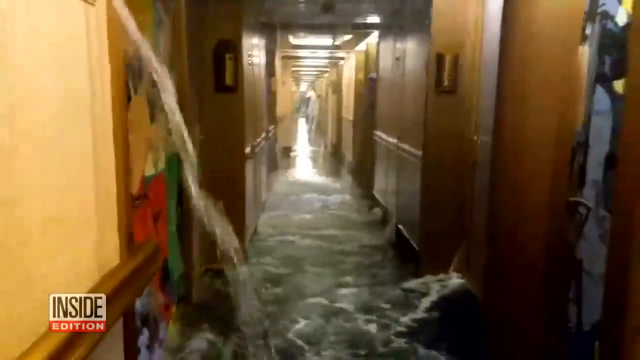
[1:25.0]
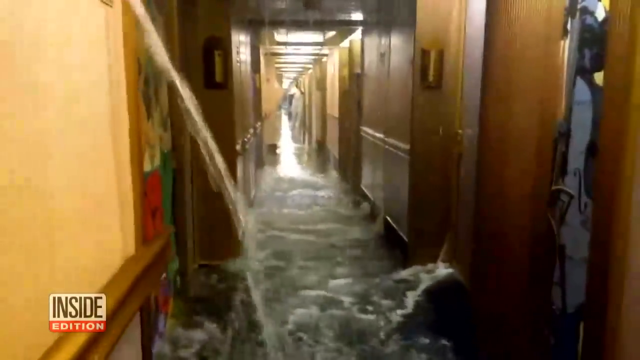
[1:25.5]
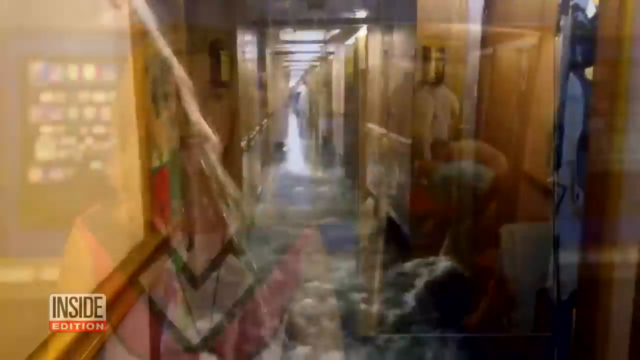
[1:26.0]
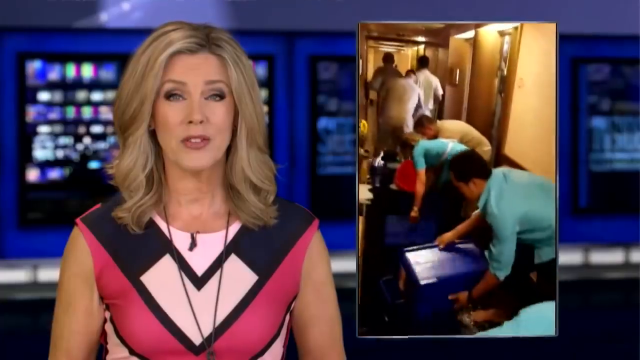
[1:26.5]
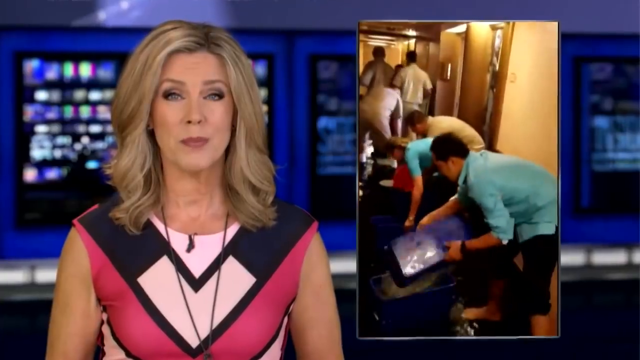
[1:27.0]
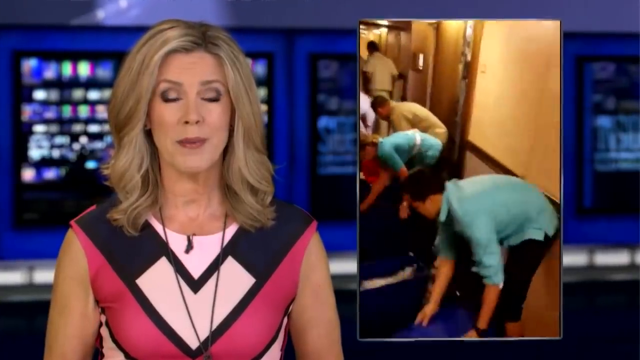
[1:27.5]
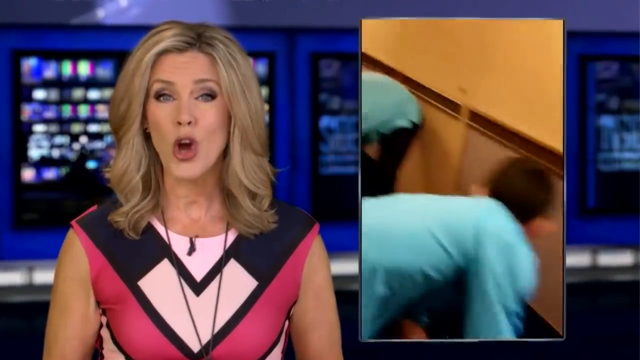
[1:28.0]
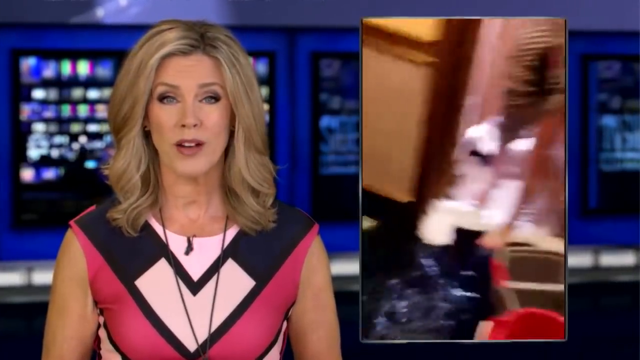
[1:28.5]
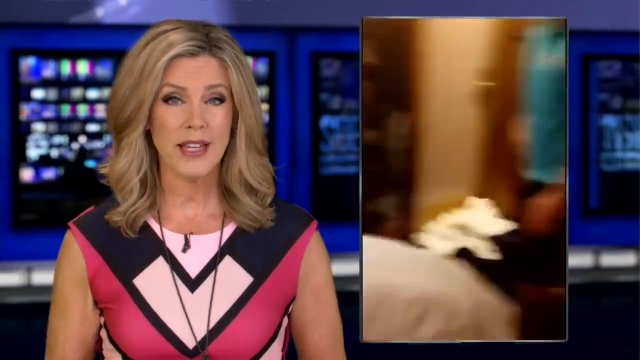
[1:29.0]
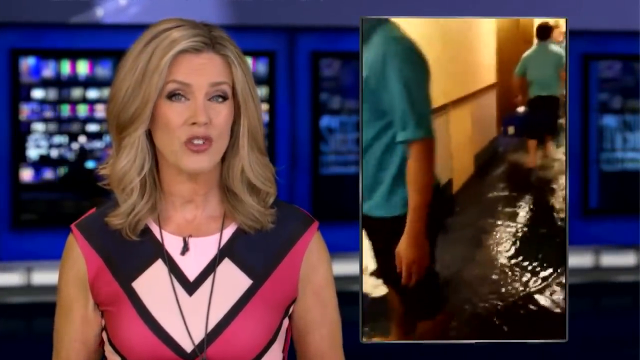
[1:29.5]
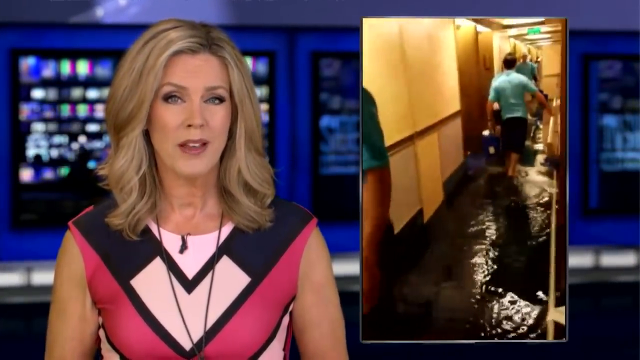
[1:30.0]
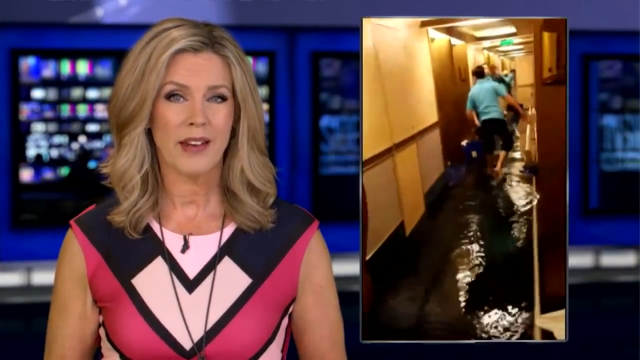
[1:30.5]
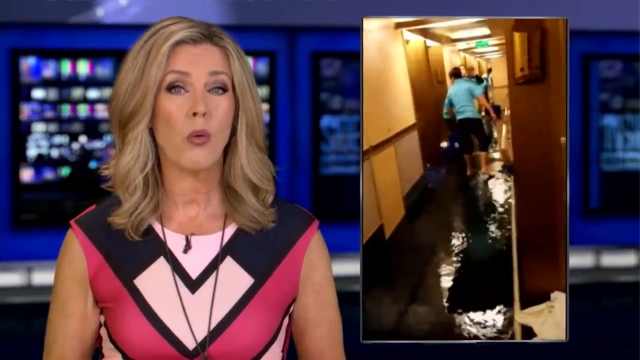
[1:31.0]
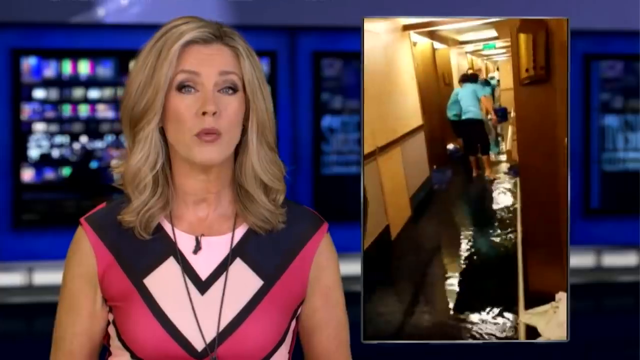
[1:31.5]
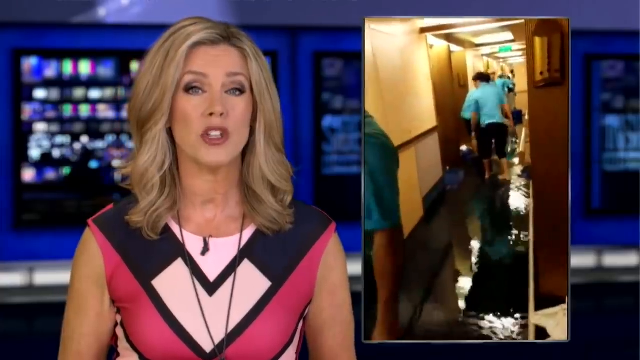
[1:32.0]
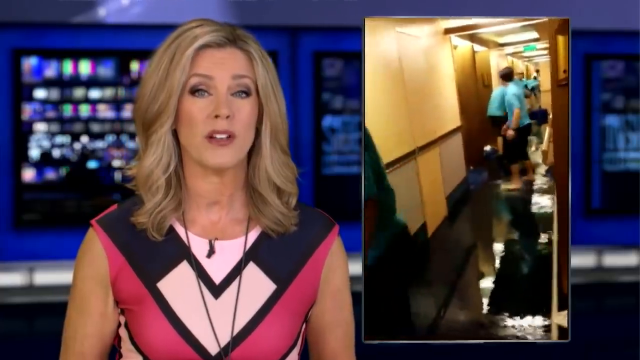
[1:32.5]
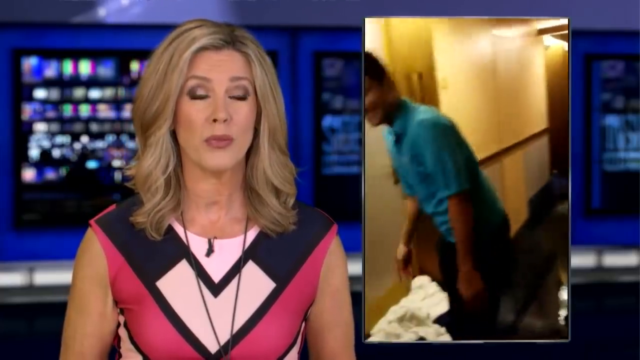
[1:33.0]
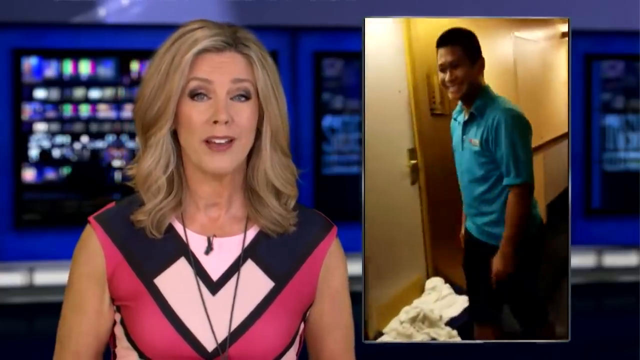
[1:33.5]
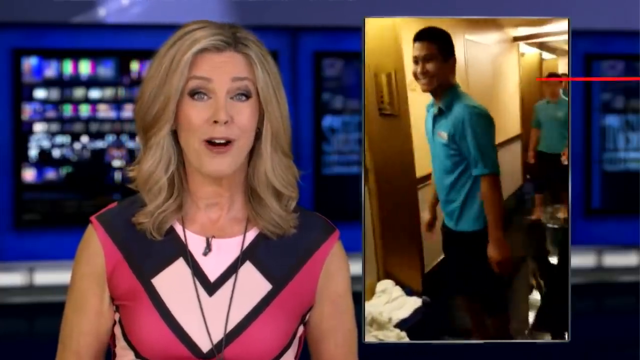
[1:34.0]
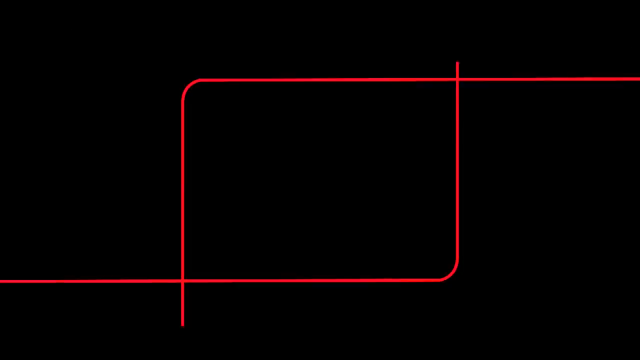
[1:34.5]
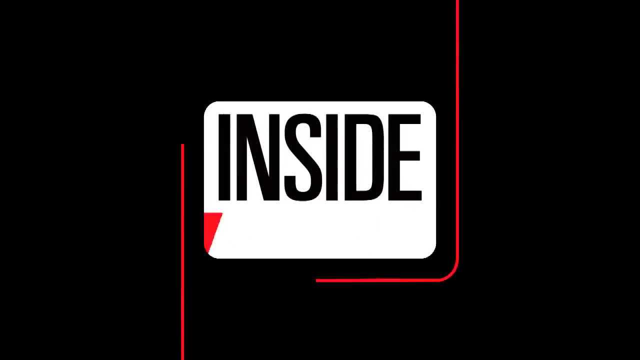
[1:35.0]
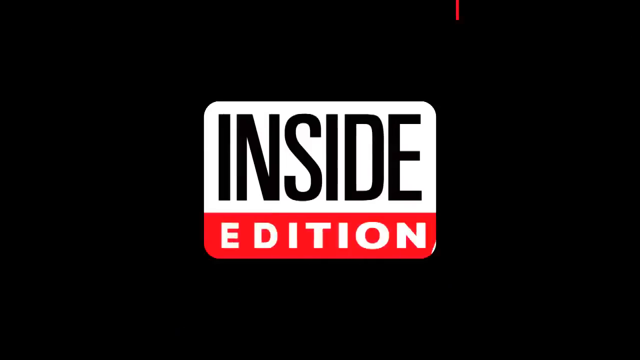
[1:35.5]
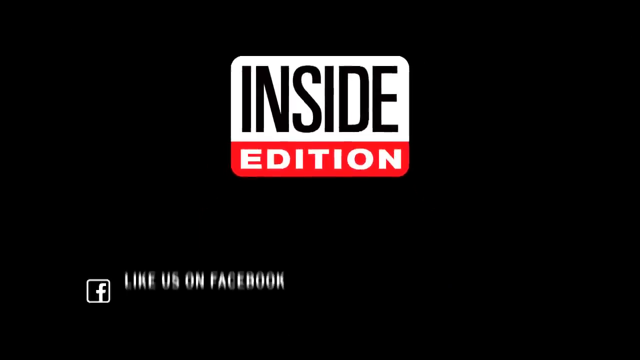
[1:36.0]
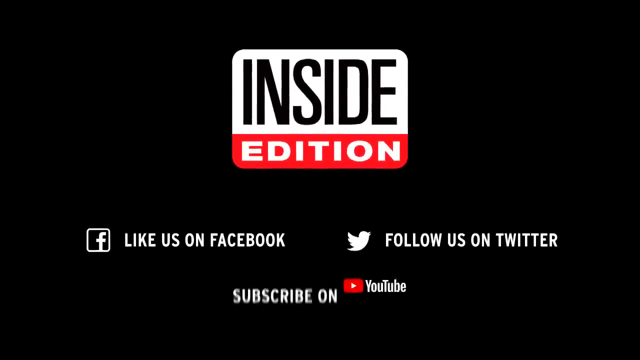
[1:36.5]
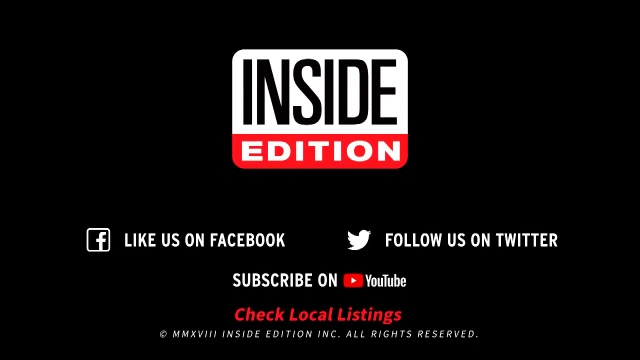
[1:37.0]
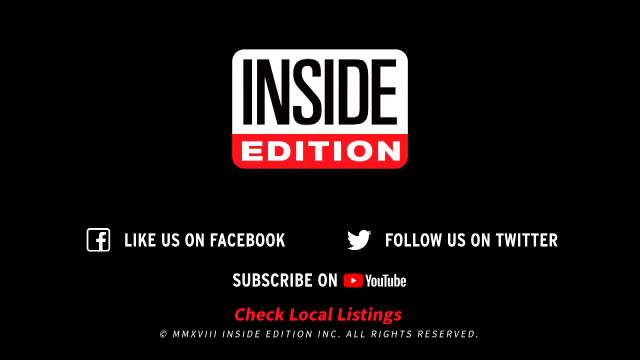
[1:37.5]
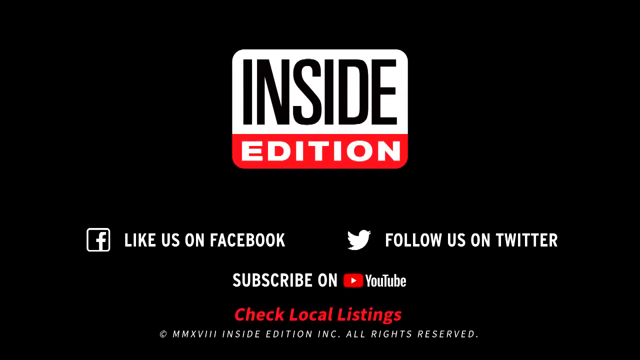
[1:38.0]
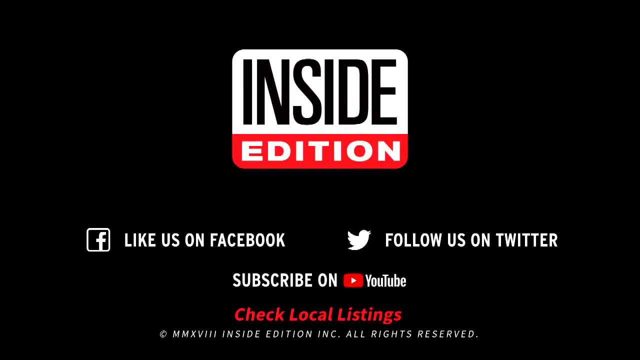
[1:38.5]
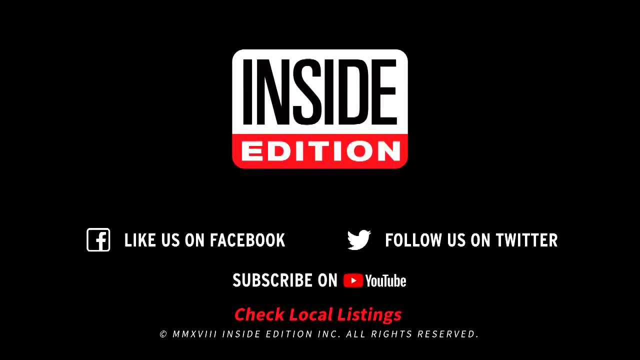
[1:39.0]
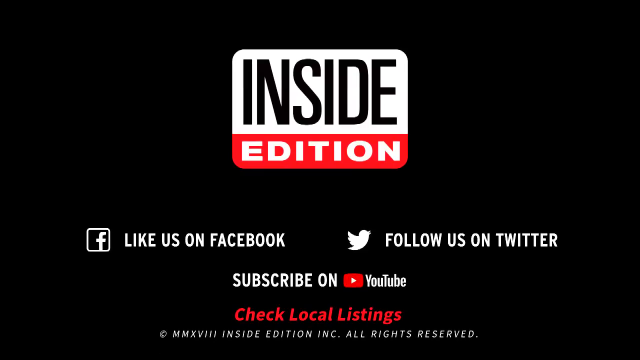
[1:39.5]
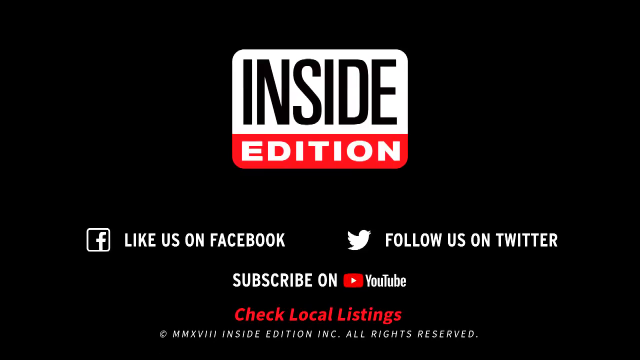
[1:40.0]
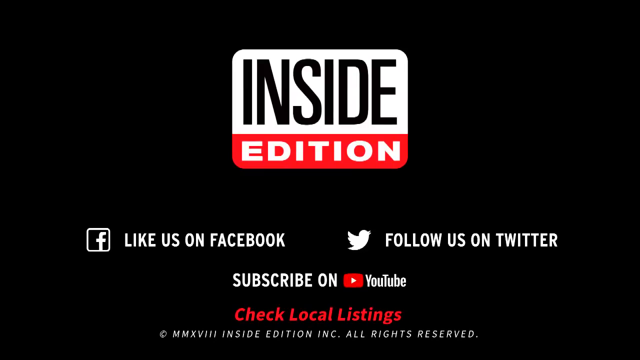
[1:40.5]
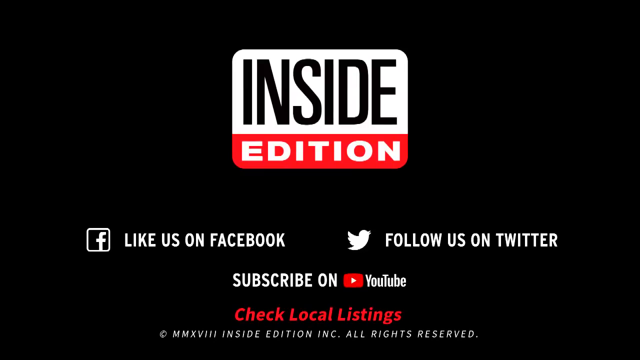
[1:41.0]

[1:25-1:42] The individuals in their baby blue outfits are shown again, panning and digging out the water. They appear to be smiling and having a great time as they interact with each other. The view then pans to the hostess, who appears to be wearing a checkered-style dress in pink, light pink and black. Several screens behind her appear to be blue and also show a mixture of other colors: green, red, yellow and purple. She appears to have a serious demeanor as she wraps up the show, which concludes with the Inside Edition logo, followed by several other options offered on their YouTube.